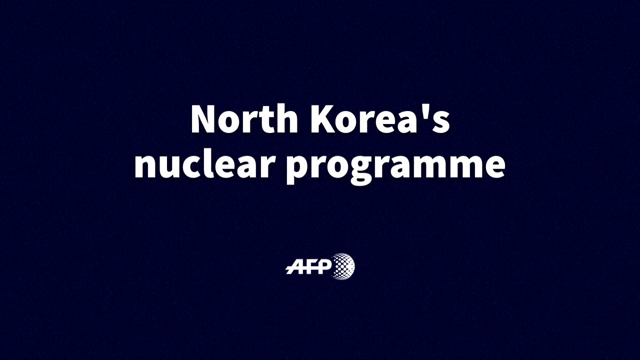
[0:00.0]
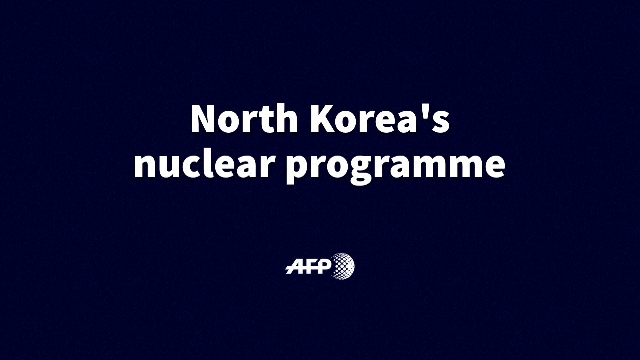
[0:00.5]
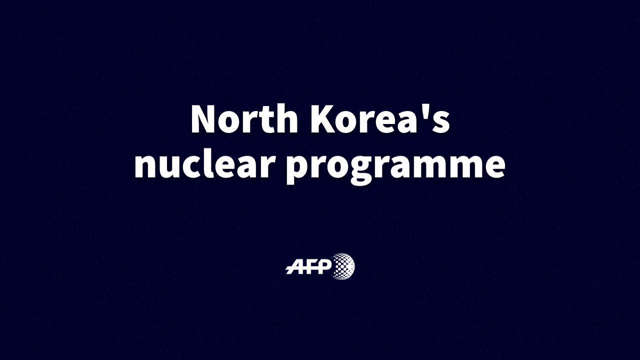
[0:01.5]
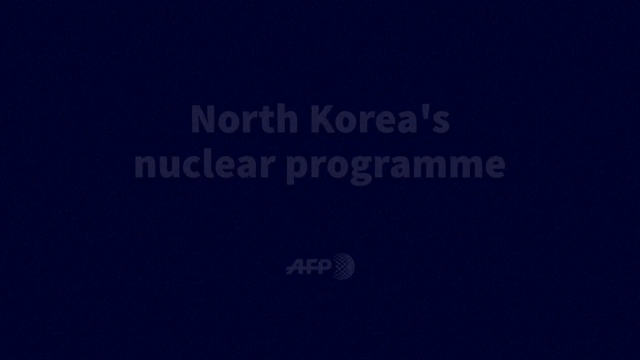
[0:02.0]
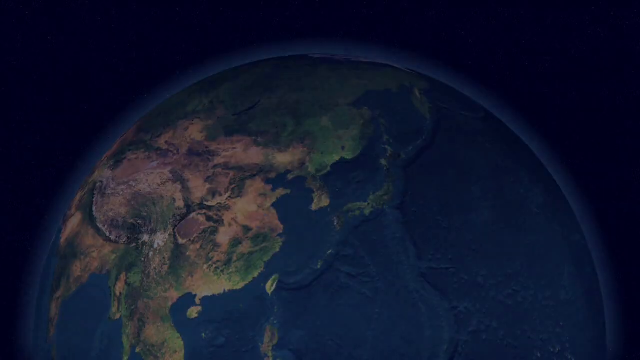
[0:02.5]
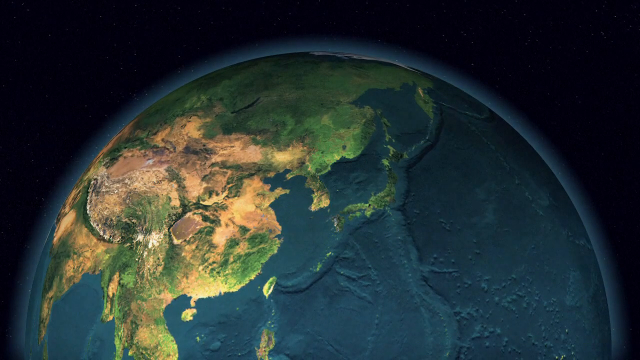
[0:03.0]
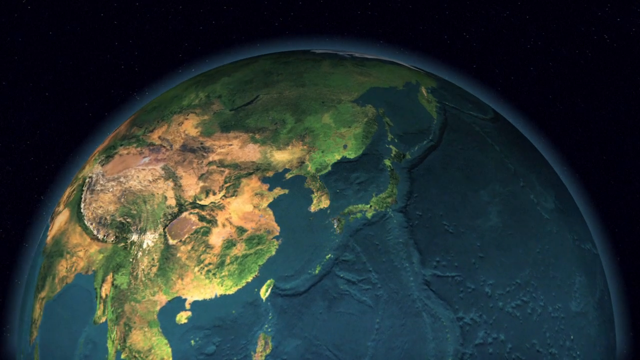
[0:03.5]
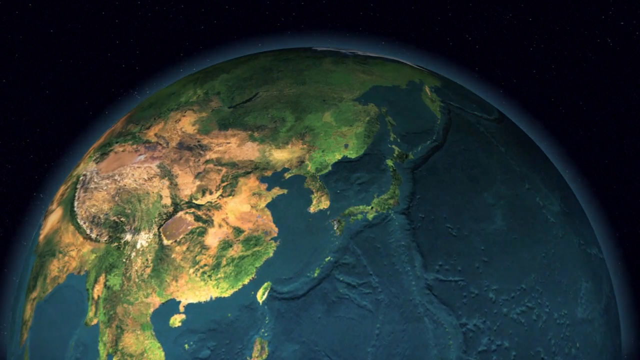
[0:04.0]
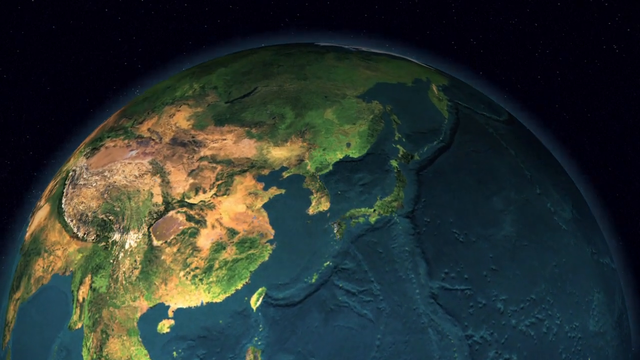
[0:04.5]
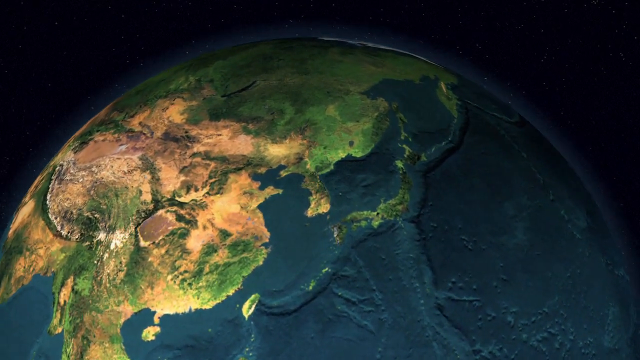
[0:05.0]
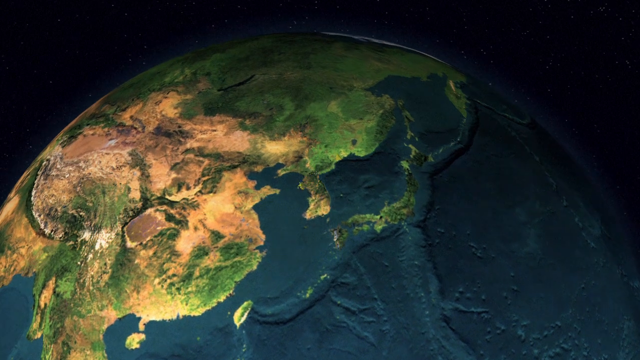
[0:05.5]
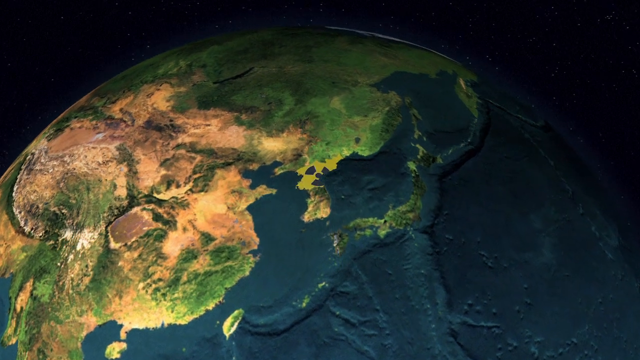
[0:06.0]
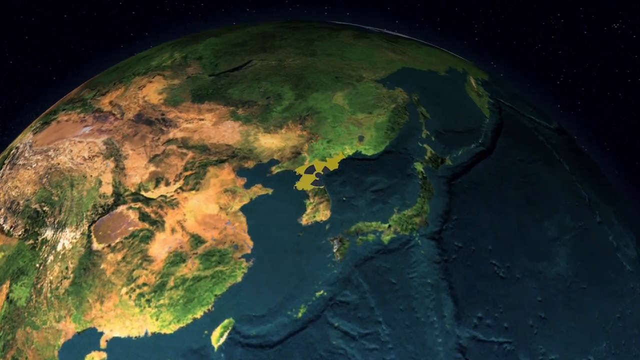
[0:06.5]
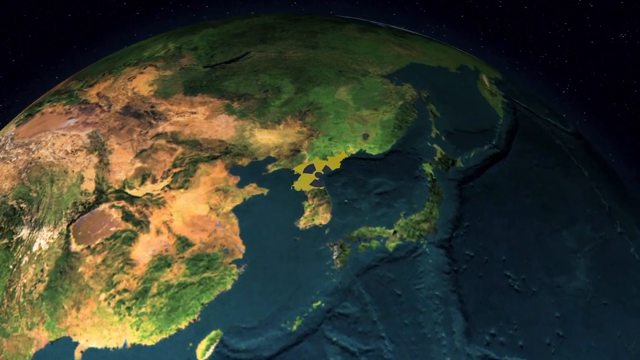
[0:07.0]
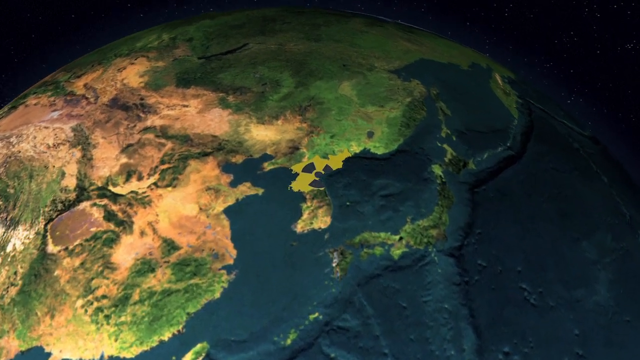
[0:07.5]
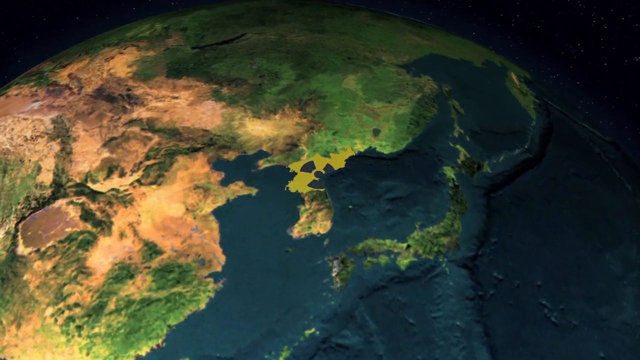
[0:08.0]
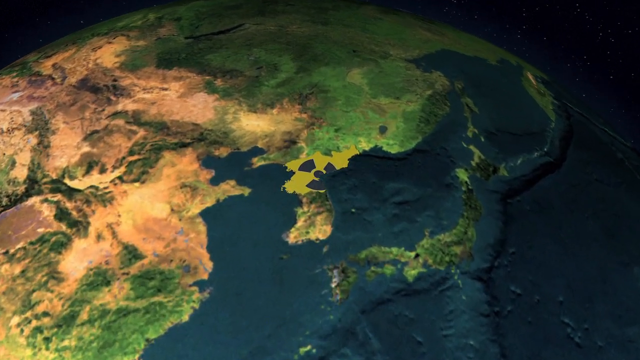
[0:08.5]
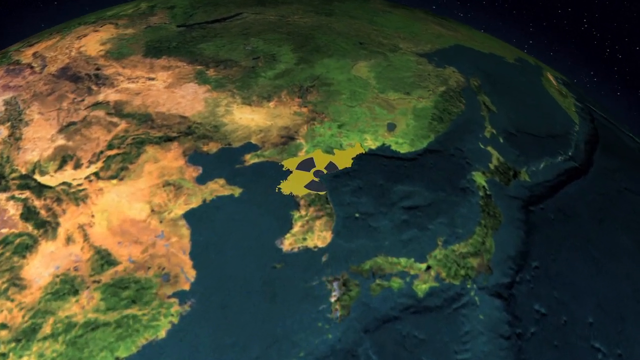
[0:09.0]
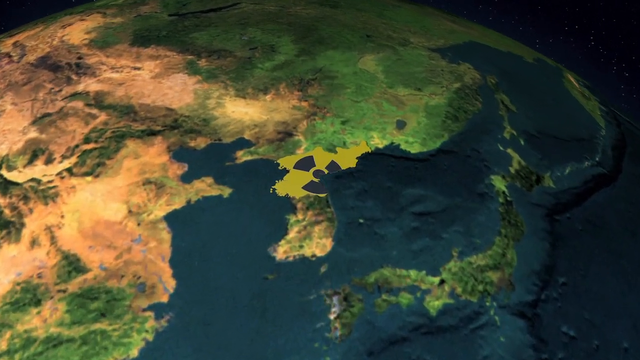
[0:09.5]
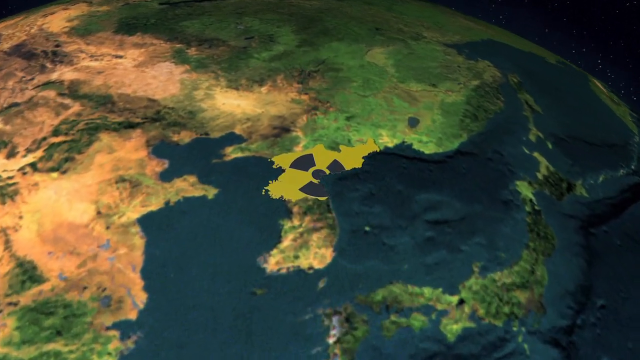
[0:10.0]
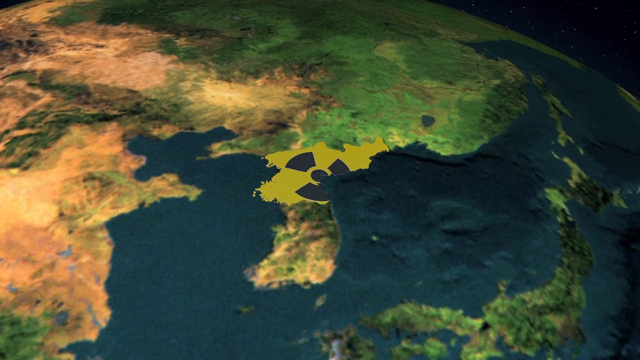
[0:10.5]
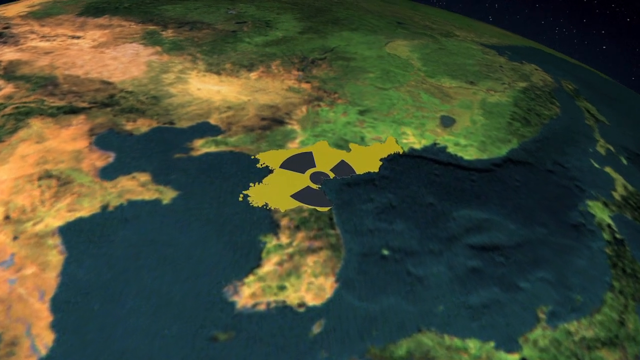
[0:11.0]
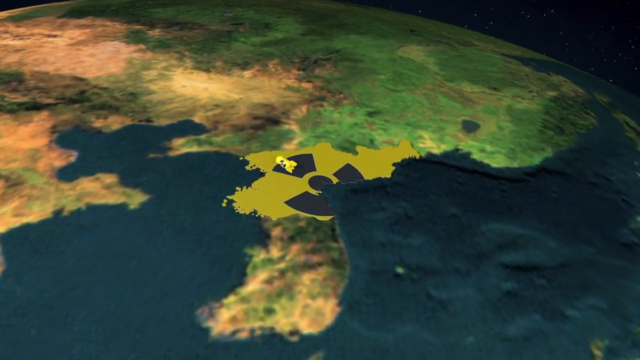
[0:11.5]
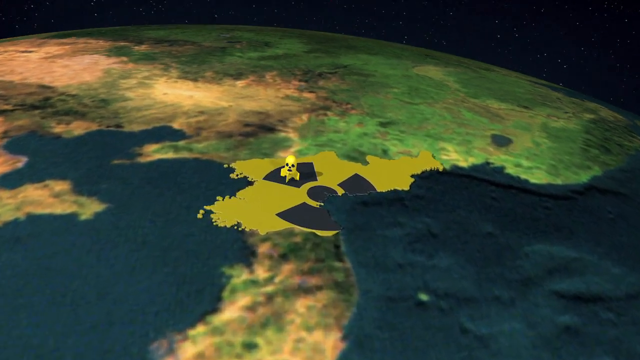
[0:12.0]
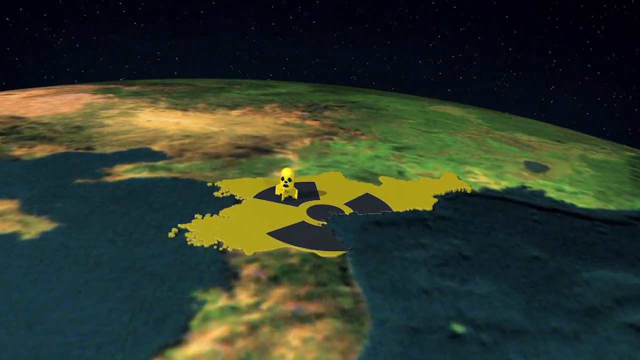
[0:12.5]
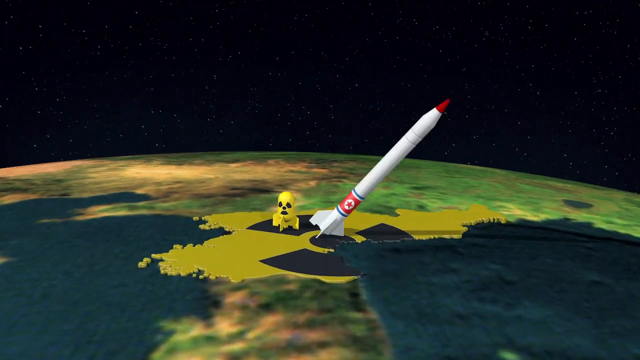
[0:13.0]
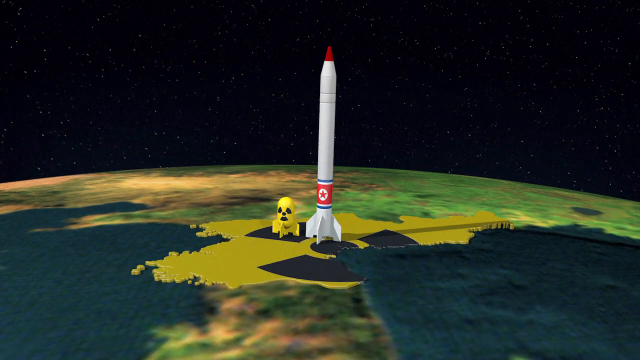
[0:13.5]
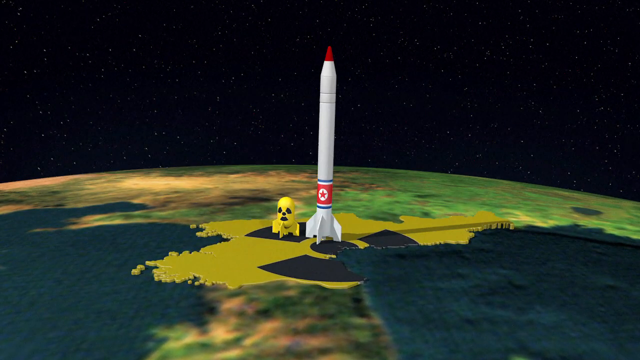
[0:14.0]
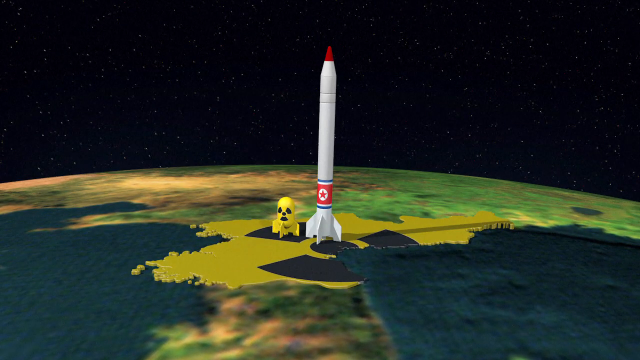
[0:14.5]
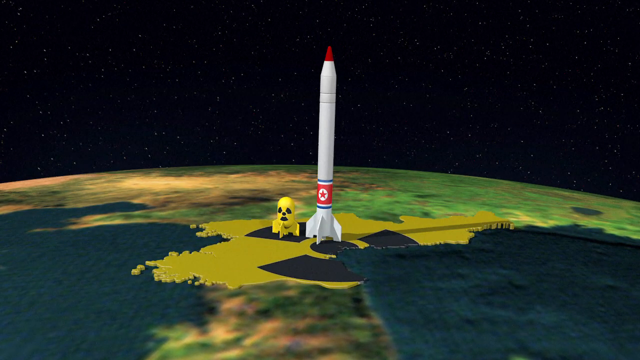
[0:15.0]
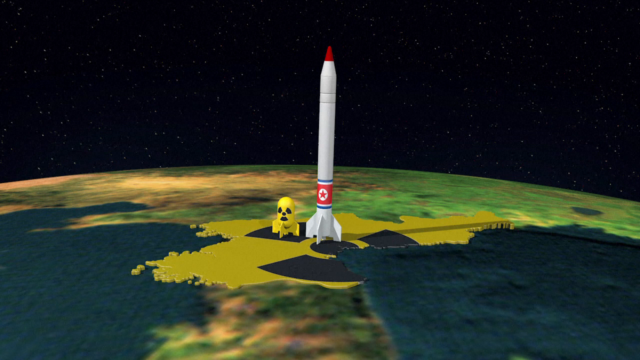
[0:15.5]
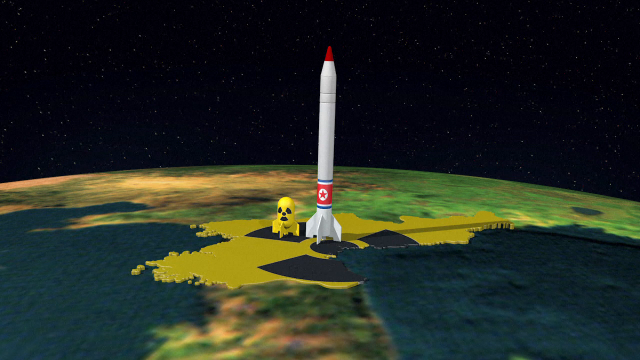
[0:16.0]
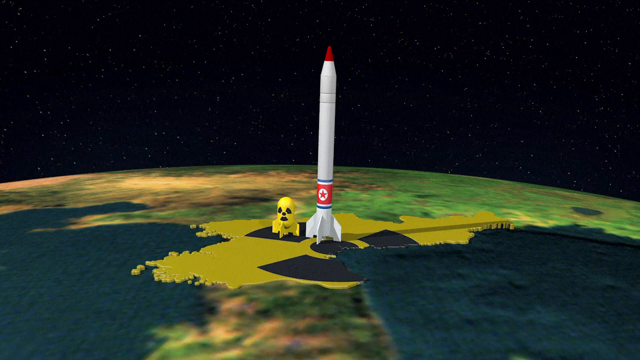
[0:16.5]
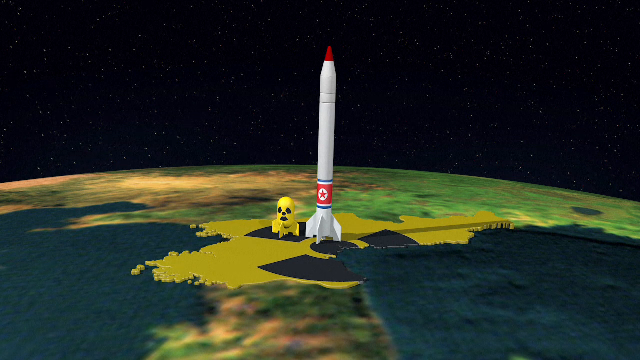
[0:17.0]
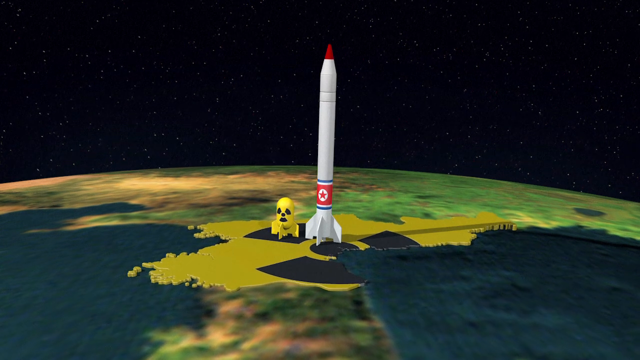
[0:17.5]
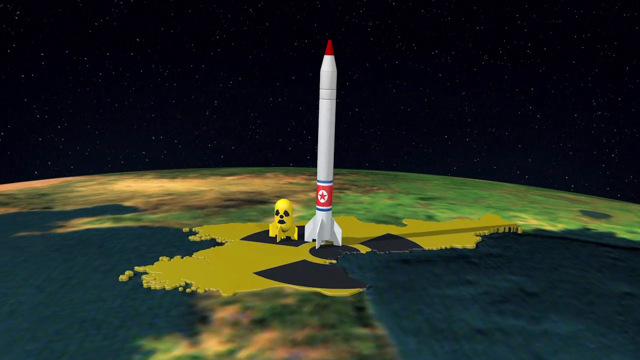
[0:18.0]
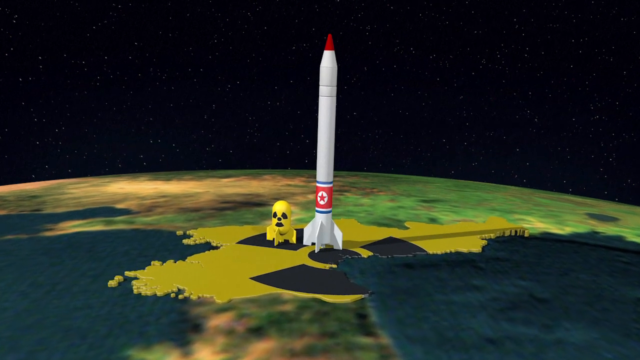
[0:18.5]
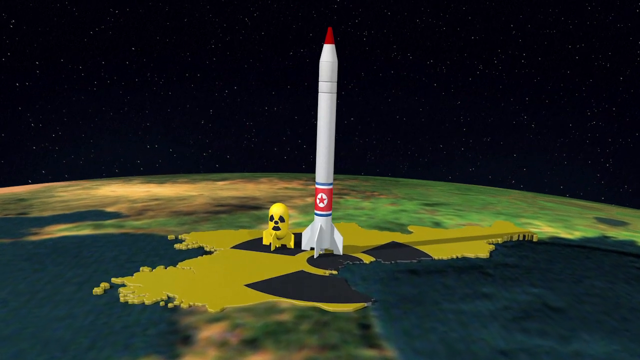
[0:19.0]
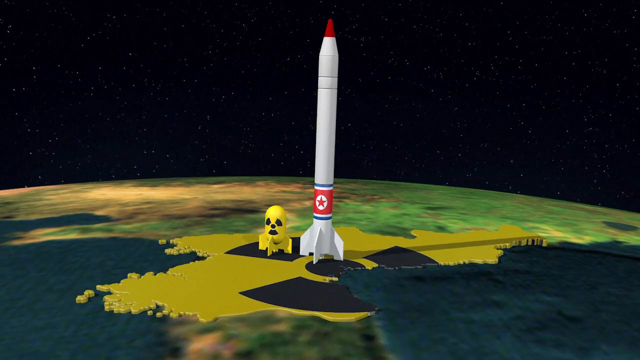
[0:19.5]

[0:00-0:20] The video is about North Korea's nuclear program. It opens on a black screen with white text reading "North Korea's Nuclear programme." A rendering of planet Earth follows, with all the countries visible; the grass is green, the land is brown and the ocean is blue. The view zooms in on East Asia, coming close to North Korea, which is shown in yellow. Other land near North Korea is visible in the distance. A cartoon bomb and cartoon rockets appear: the bomb is little and yellow, and the rocket is slim and tall, white with a red tip and a red star on it. They stand side by side on the yellow map of North Korea, and there are holes in the map where they stand.